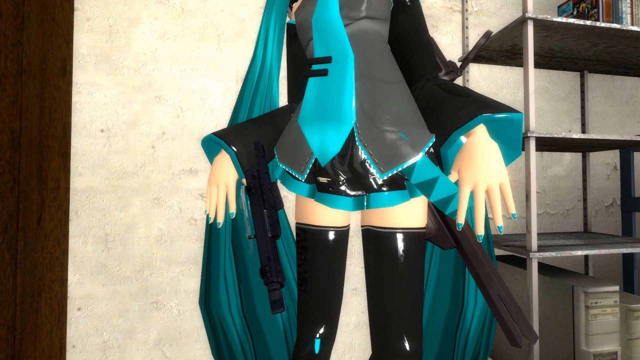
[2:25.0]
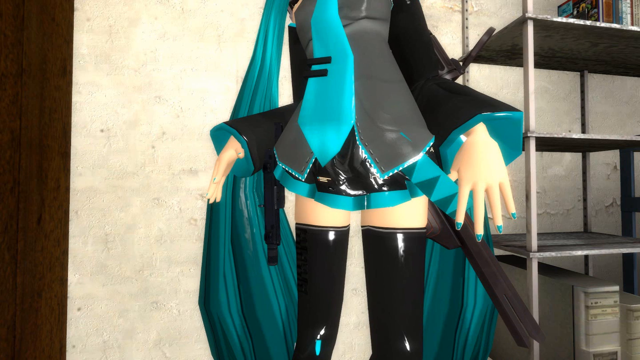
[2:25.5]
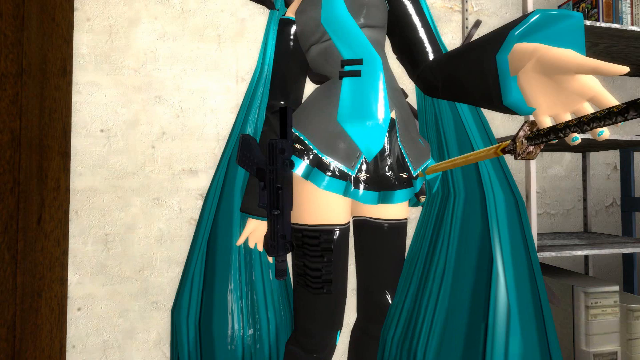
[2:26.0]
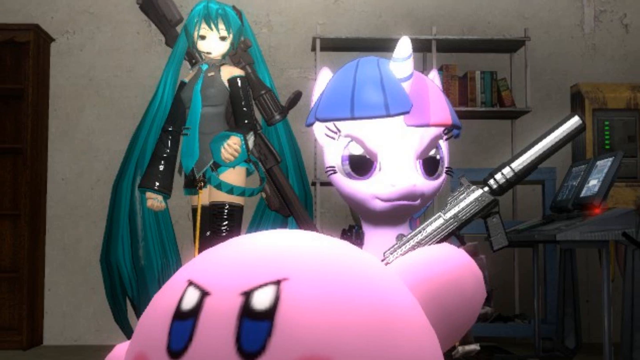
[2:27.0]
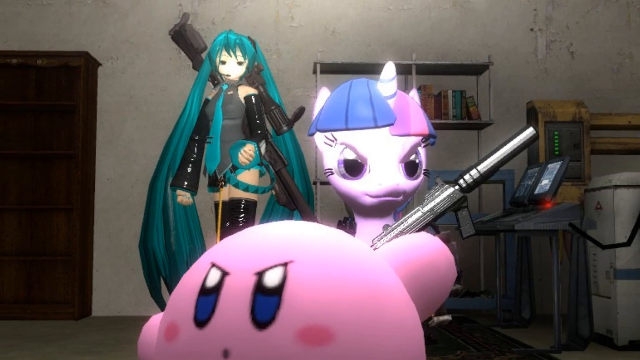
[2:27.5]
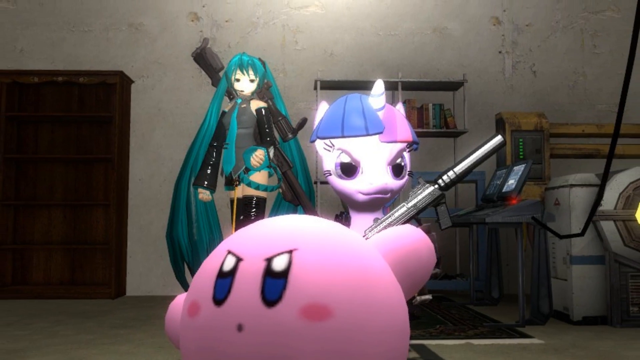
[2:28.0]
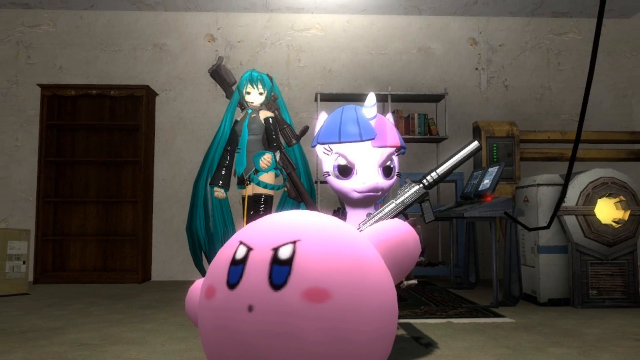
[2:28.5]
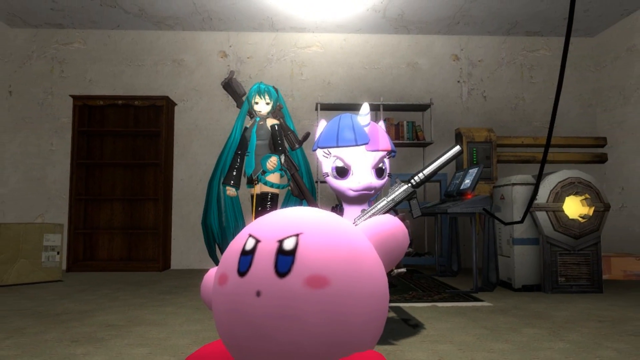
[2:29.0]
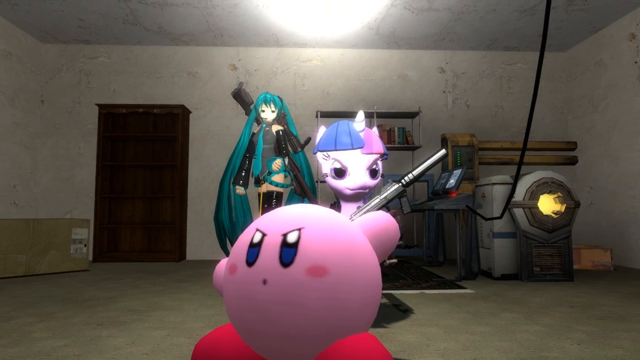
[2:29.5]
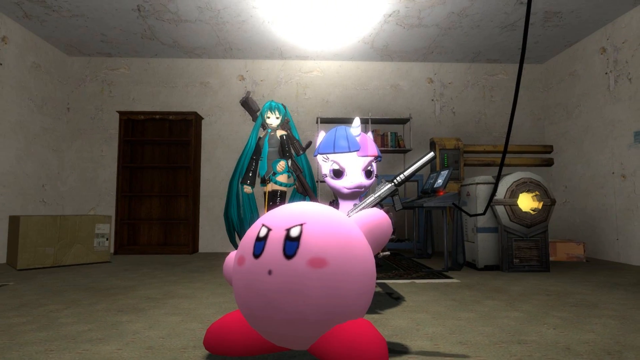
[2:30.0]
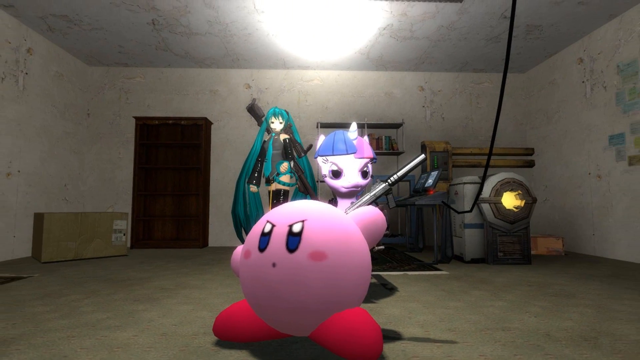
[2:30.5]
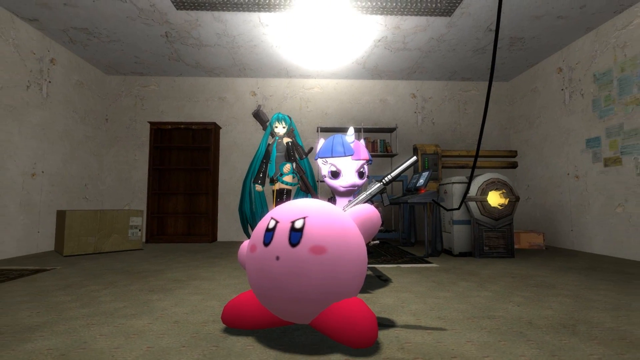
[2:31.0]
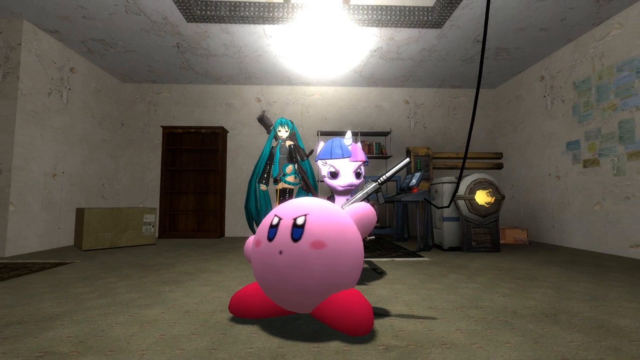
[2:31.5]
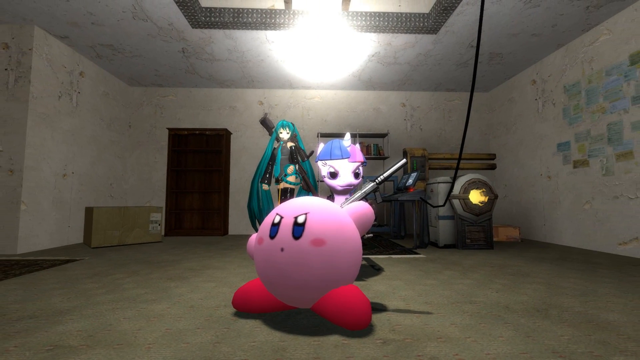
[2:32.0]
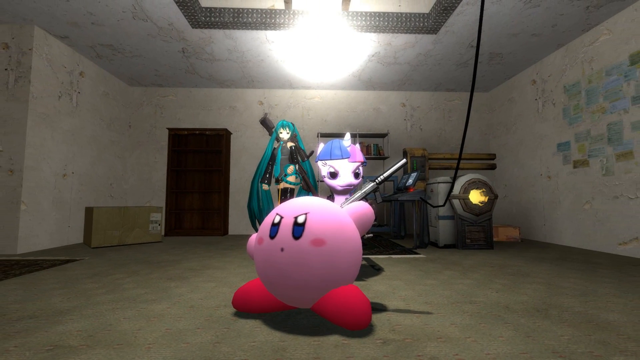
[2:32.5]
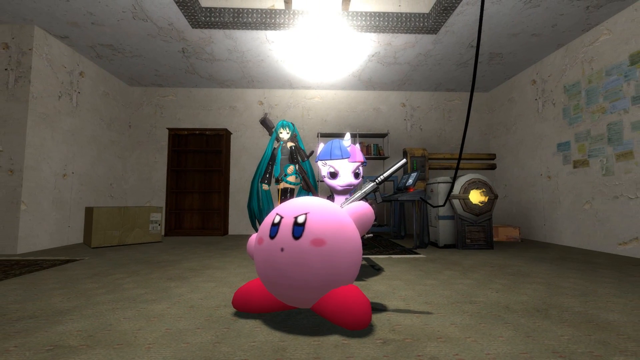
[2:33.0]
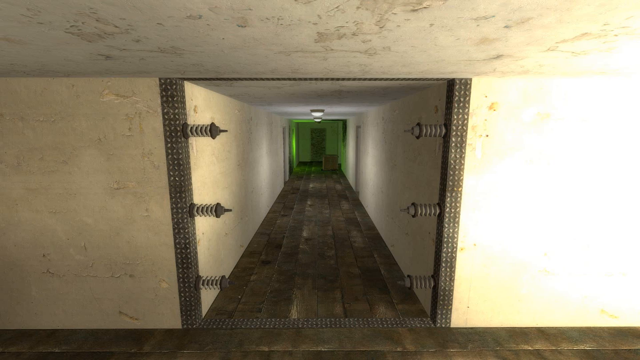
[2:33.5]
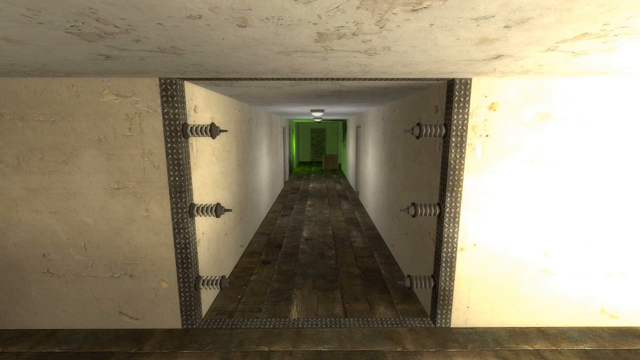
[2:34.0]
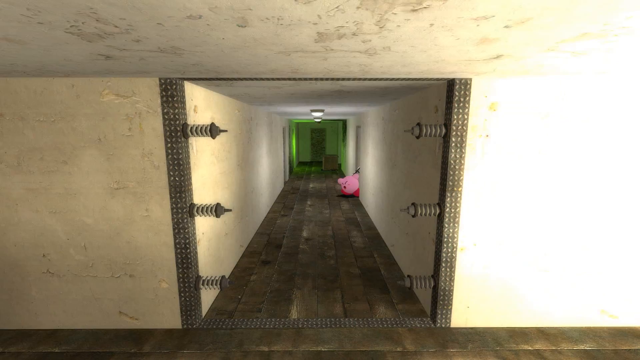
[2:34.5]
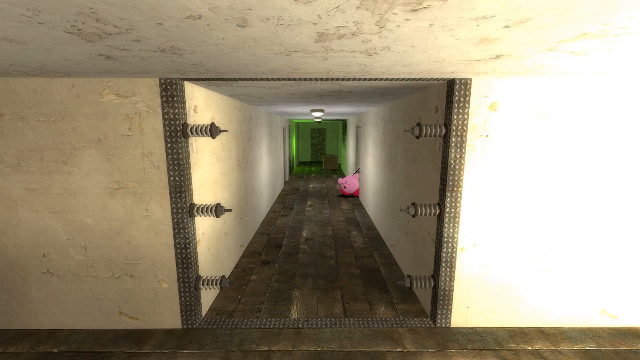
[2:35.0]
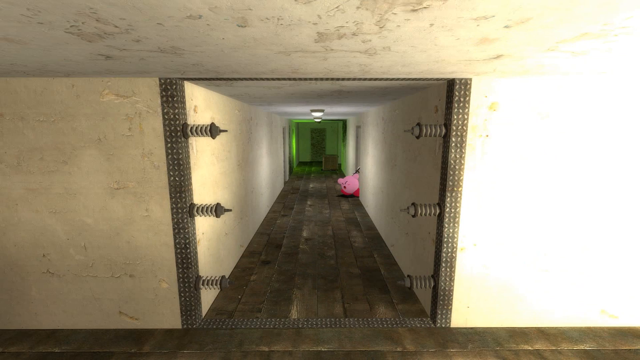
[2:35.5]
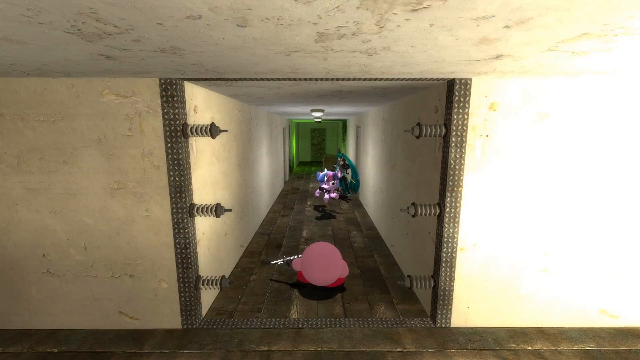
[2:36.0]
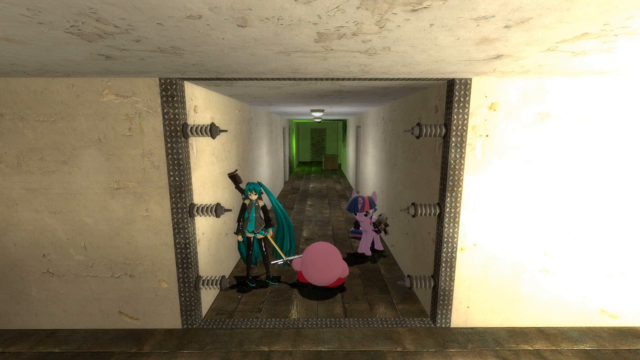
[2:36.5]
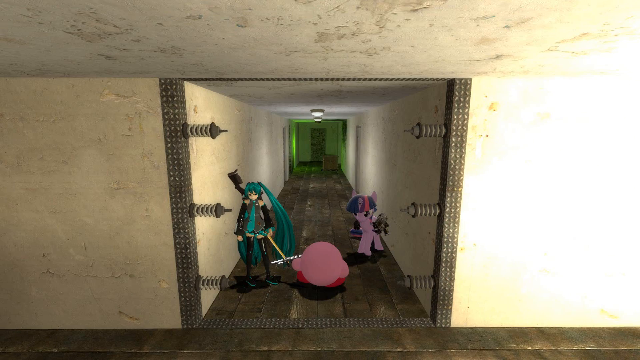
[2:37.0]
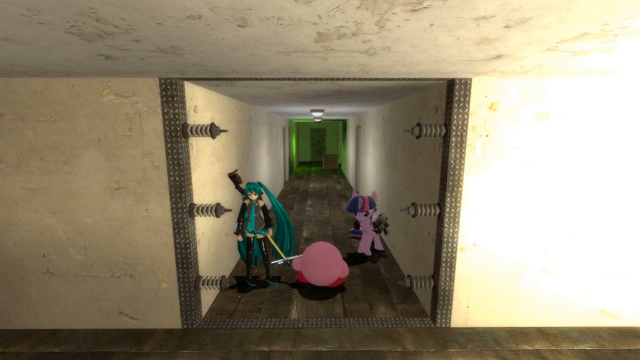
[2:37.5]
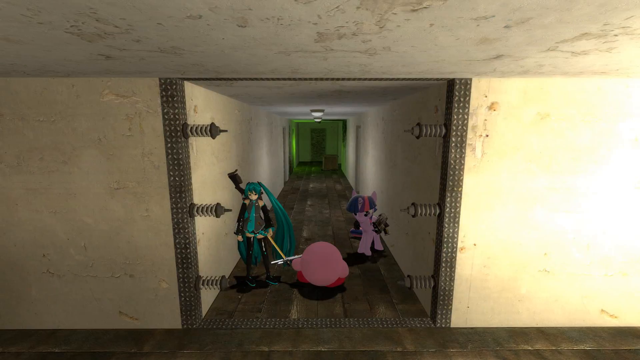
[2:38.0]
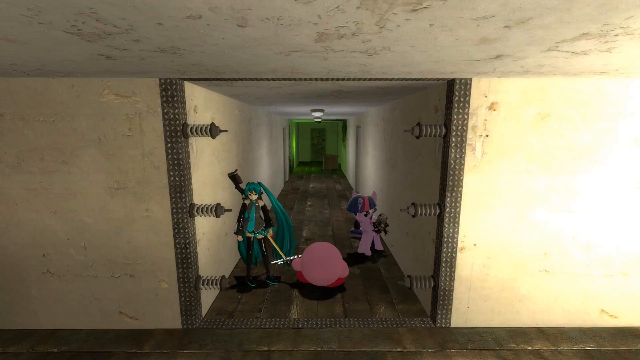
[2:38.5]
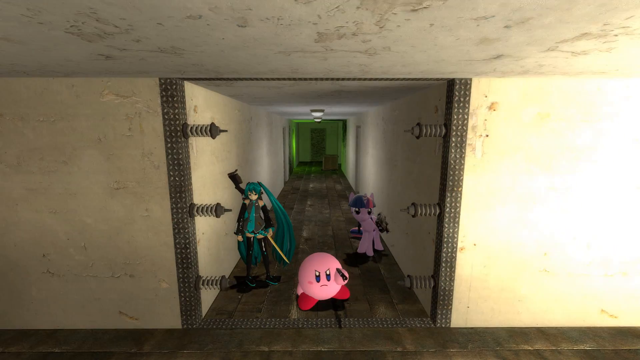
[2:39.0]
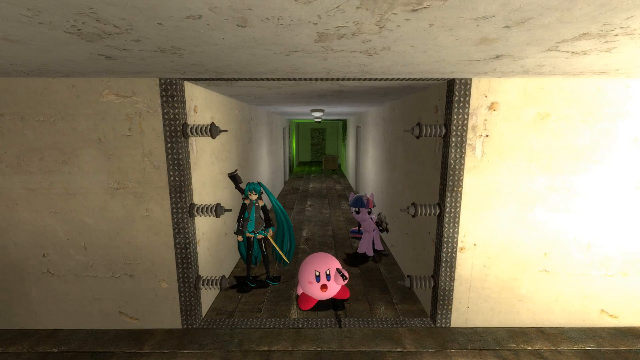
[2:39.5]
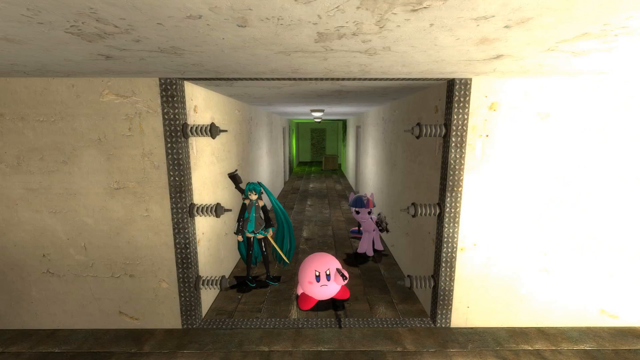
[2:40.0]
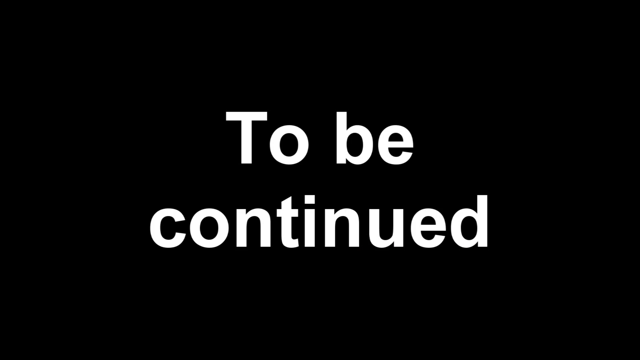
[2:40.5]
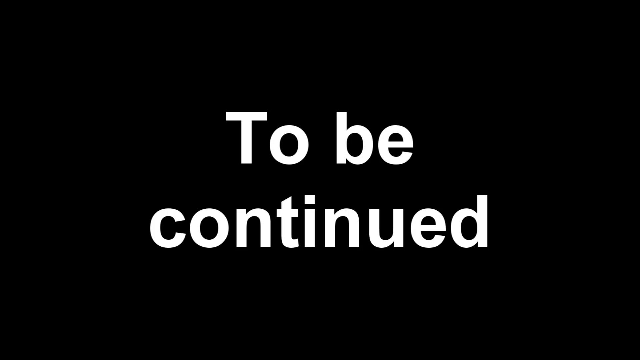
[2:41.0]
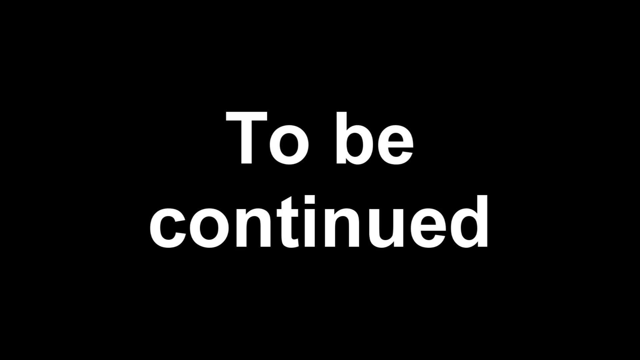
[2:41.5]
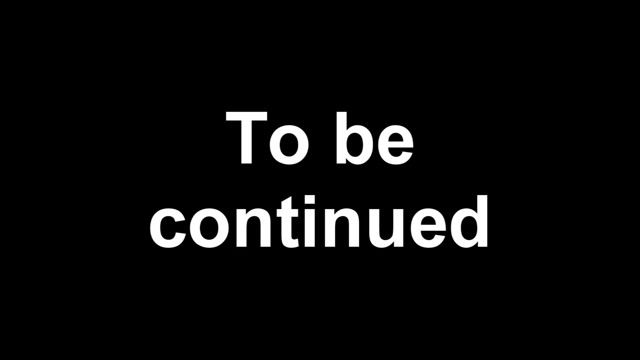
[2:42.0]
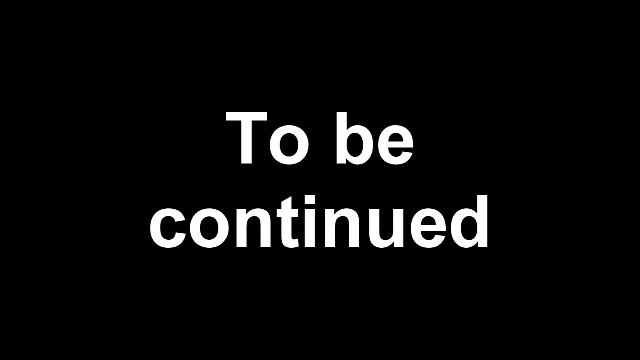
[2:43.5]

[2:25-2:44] The princess has something else in her hand that looks to be a tool, possibly a knife, and the pink little guy looks very angrily surprised. The horse is with her and also has something long and silver, unidentified. They leave the room and run down the hallway, apparently escaping. The horse looks a little bit evil, and the room looks a little bit different. The pink guy has a very puzzled, angry look and seems to be telling them which way to go. Text then reads "to be continued".